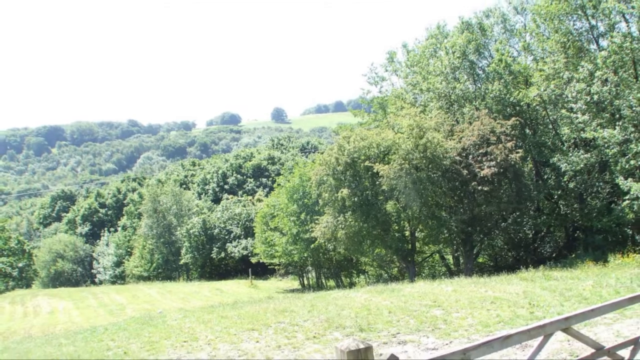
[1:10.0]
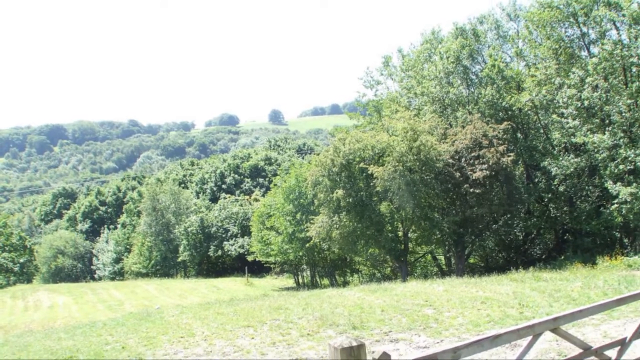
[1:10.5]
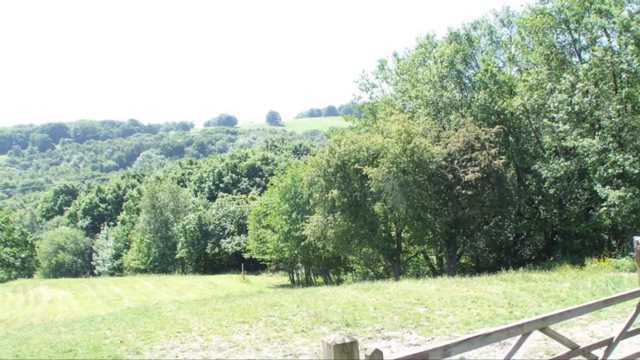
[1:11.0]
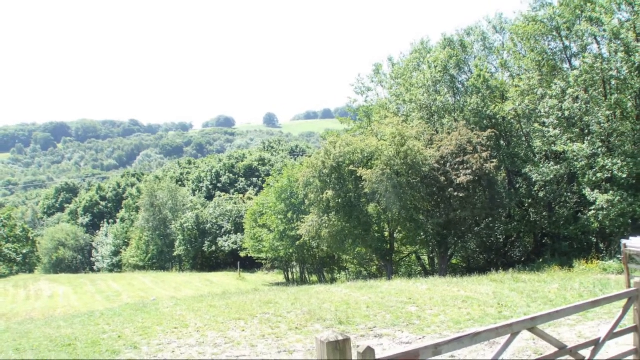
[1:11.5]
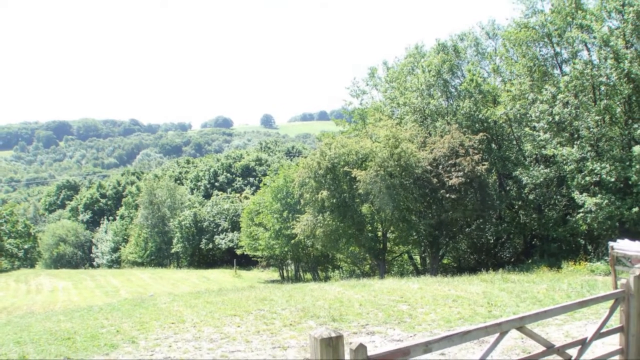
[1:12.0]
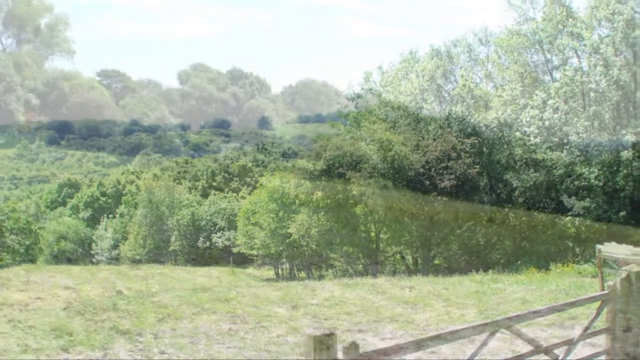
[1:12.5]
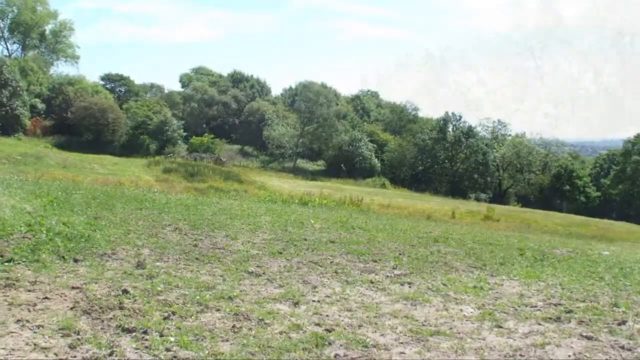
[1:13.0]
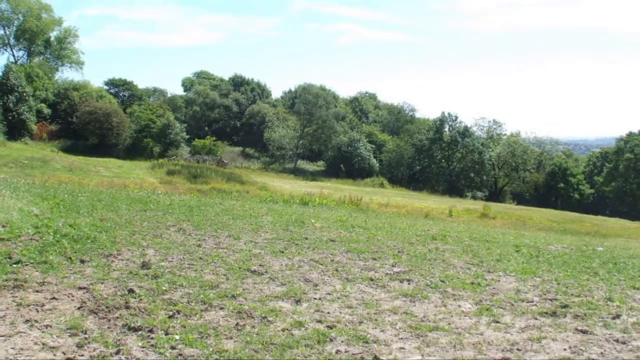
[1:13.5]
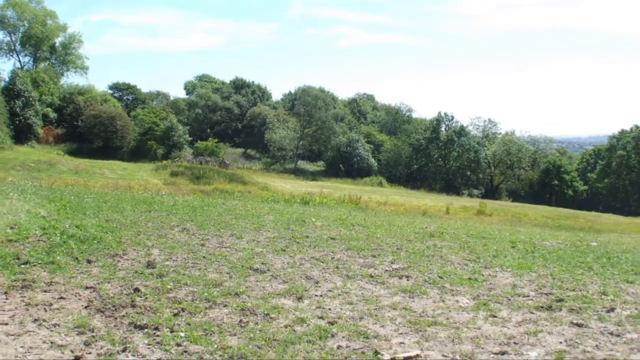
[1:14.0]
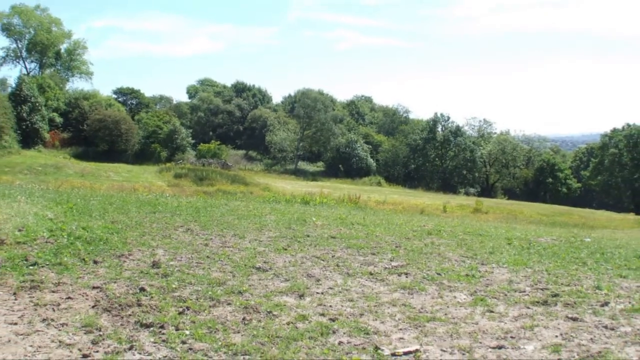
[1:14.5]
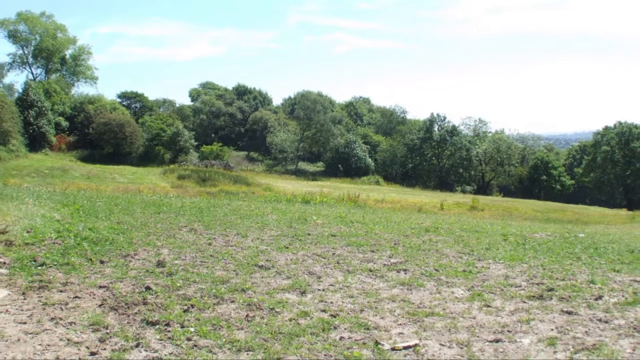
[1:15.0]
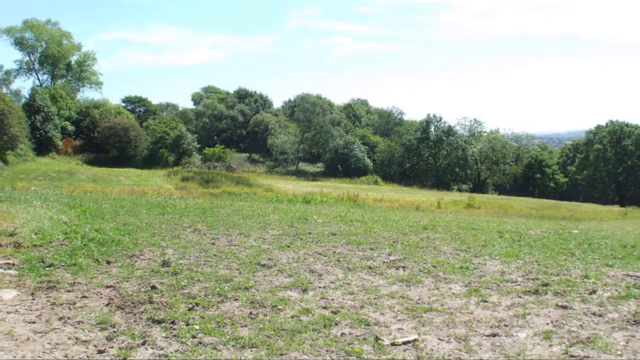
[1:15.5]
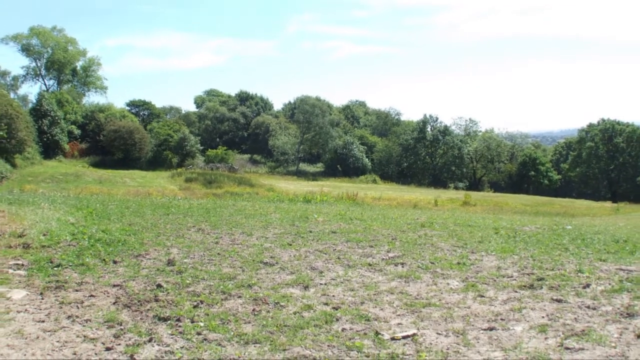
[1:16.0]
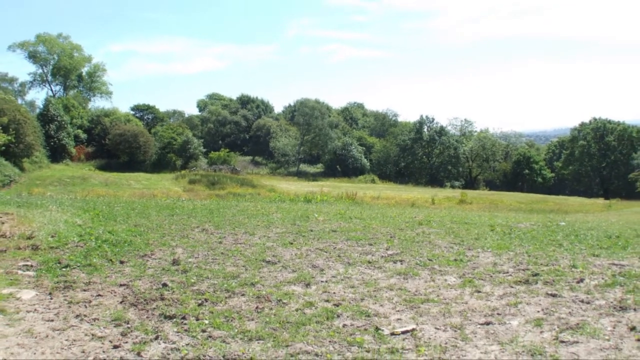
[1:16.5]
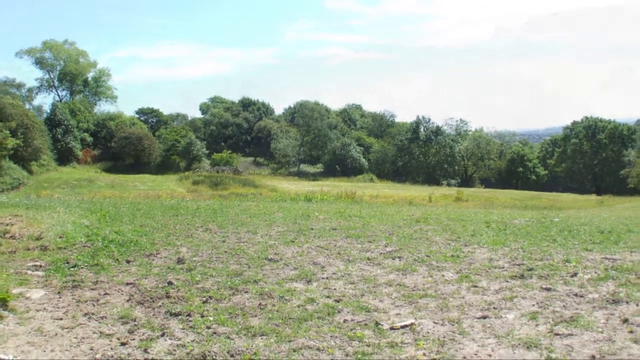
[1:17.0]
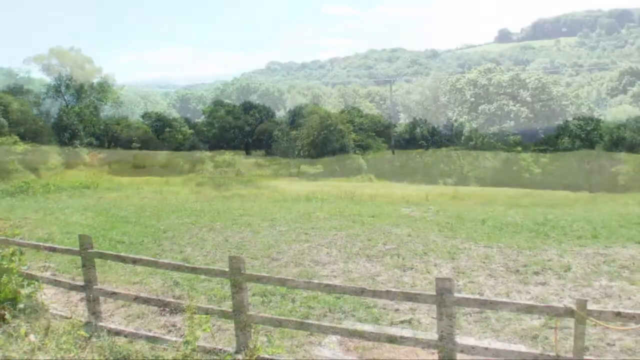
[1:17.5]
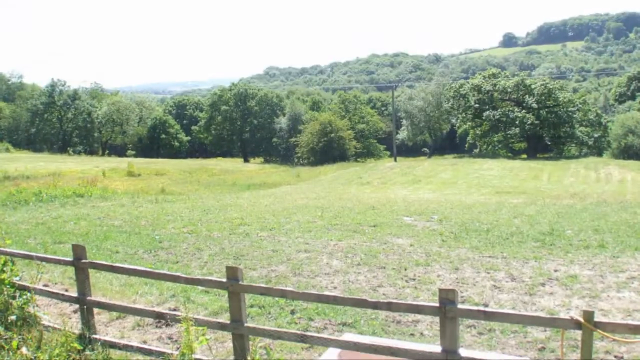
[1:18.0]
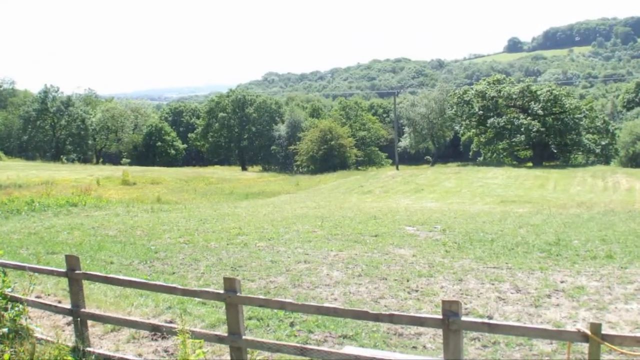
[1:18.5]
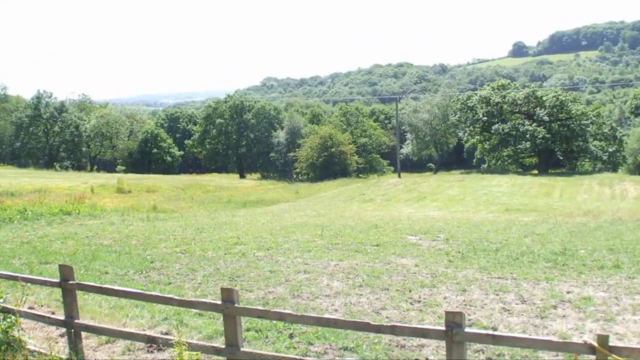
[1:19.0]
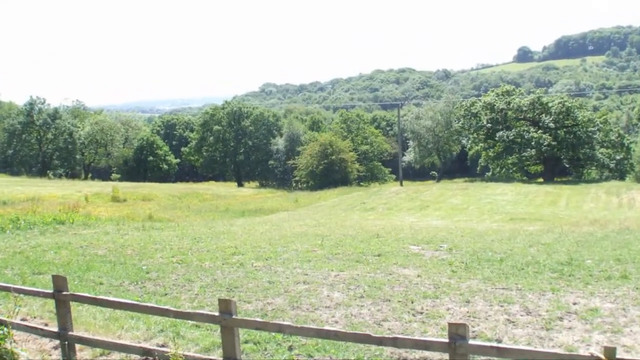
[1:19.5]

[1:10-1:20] A view looks out over the property across several rolling hills. In the distance there could be mountains, but there are trees everywhere, with green growth flourishing. The hills roll downward and the grass is very lush. Closer in, one area of the land has probably been grazed on or may have been used for tilling over the years. Only the landscape itself is shown. In the distance is another area, a clearing rather than a field. A small fence is visible, only briefly, perhaps more like a gate for that area. Shrubs come down the slope.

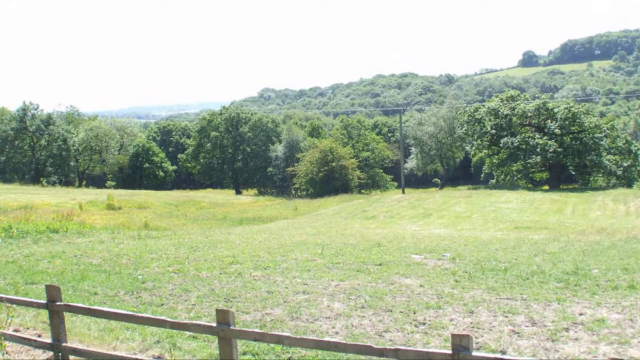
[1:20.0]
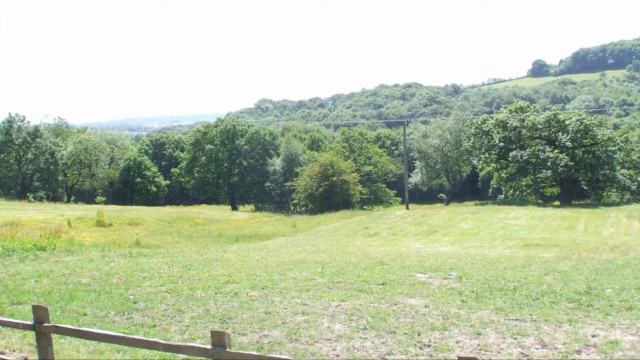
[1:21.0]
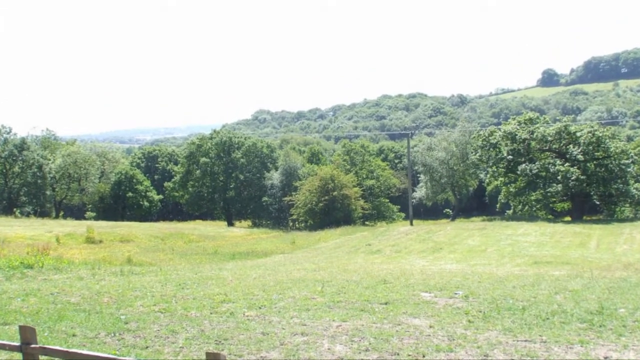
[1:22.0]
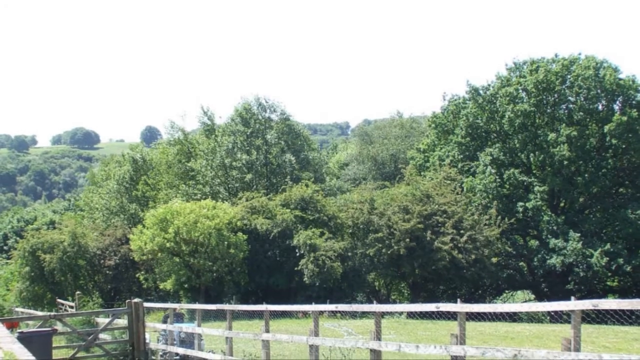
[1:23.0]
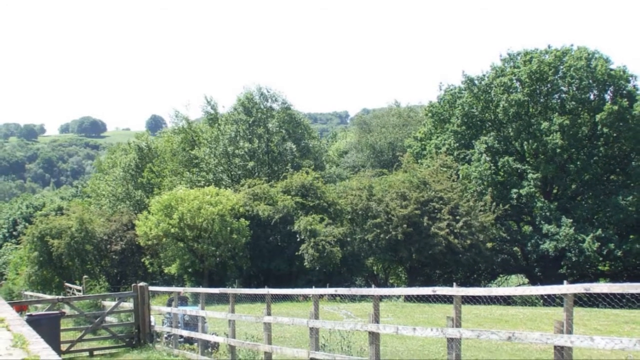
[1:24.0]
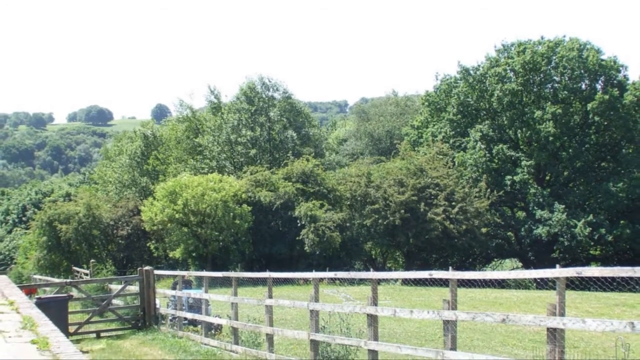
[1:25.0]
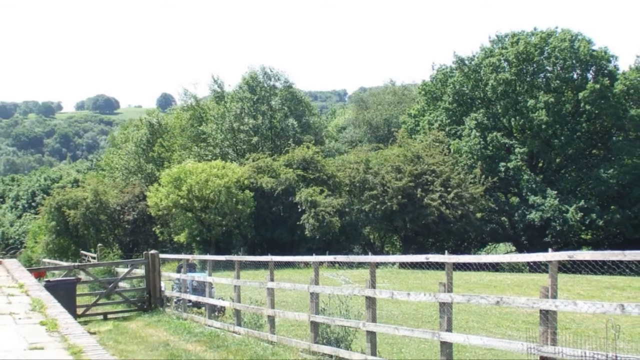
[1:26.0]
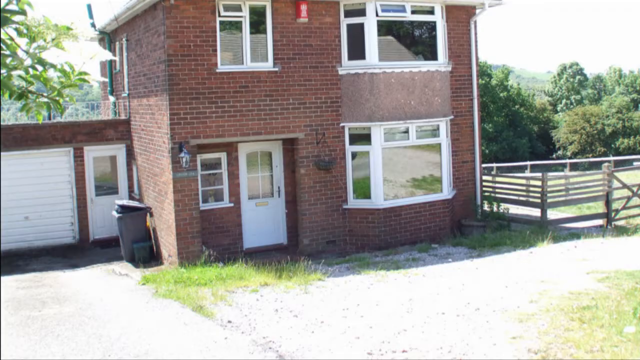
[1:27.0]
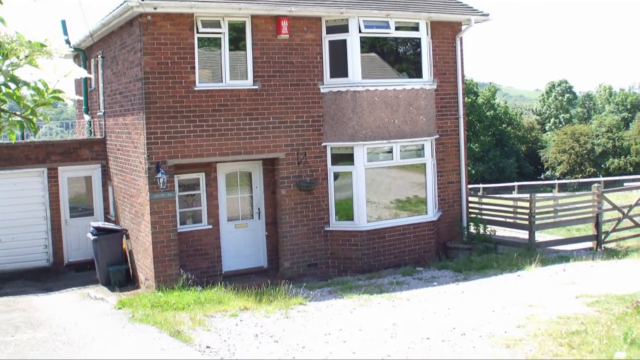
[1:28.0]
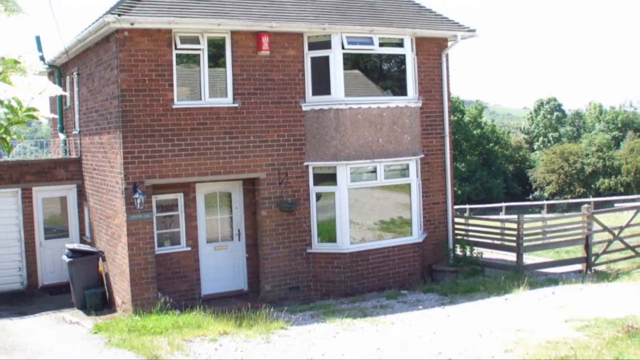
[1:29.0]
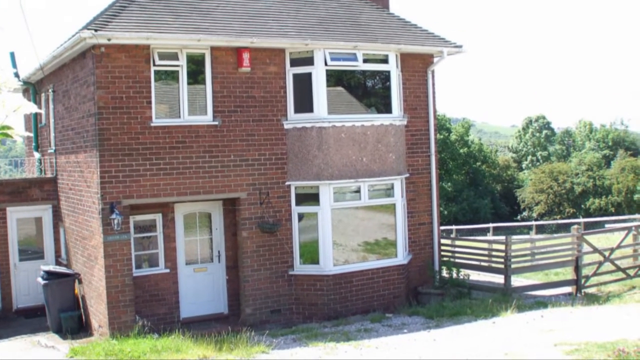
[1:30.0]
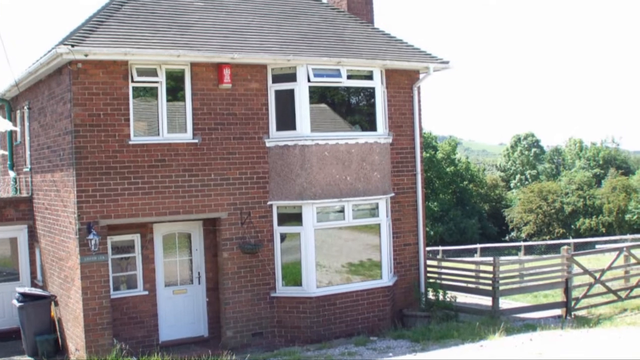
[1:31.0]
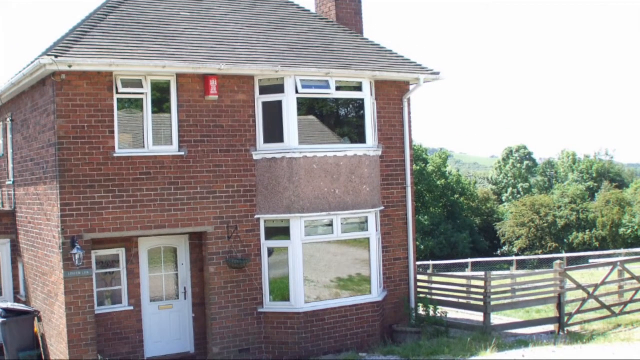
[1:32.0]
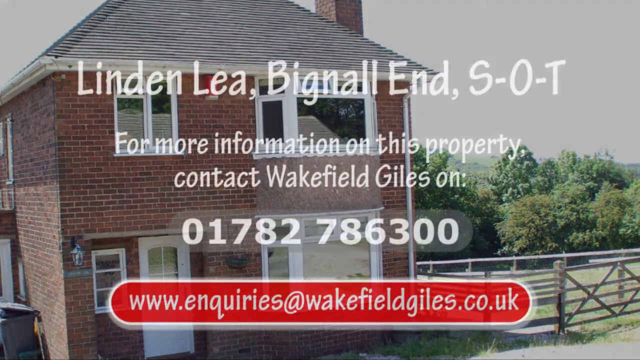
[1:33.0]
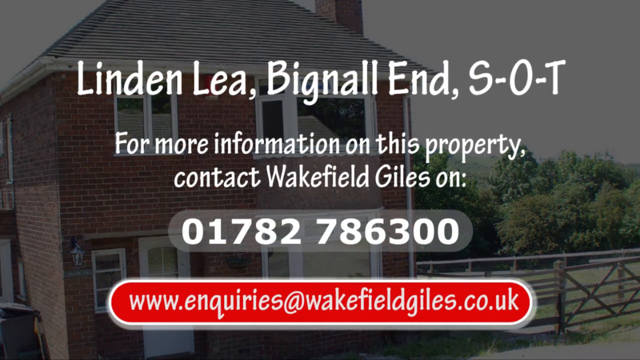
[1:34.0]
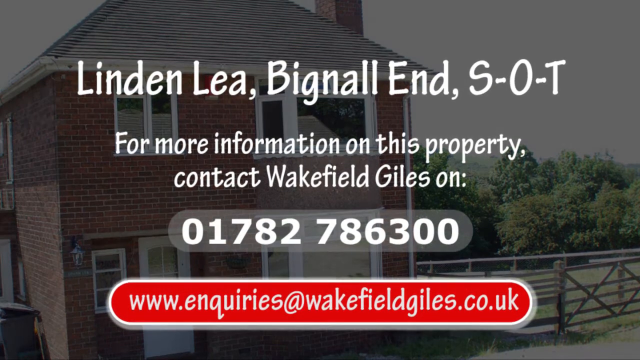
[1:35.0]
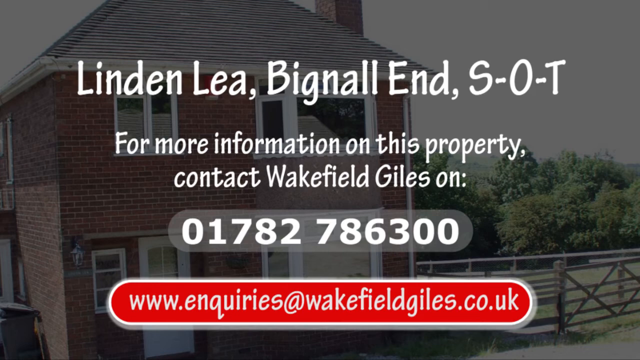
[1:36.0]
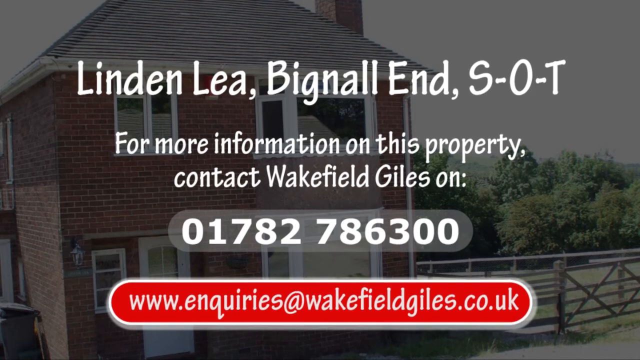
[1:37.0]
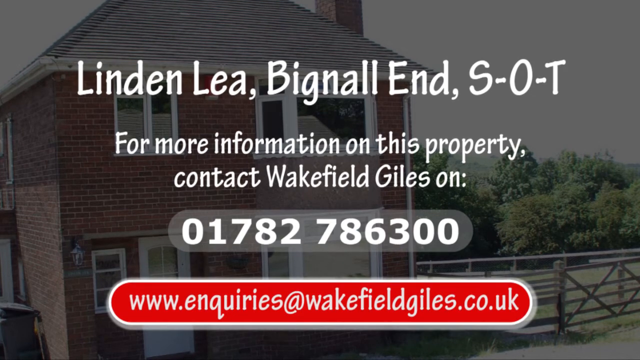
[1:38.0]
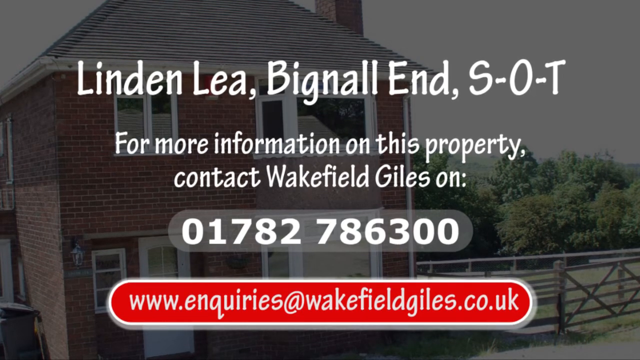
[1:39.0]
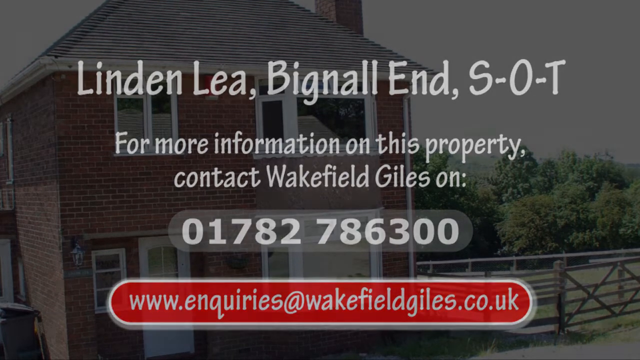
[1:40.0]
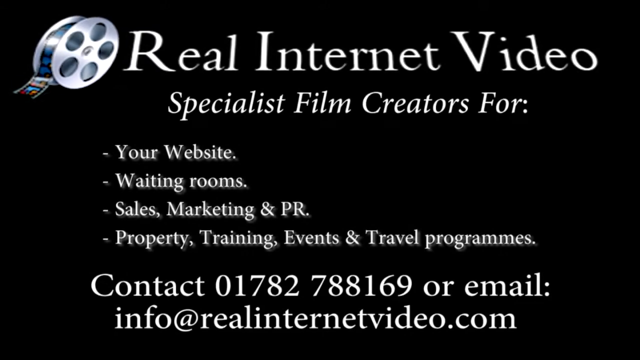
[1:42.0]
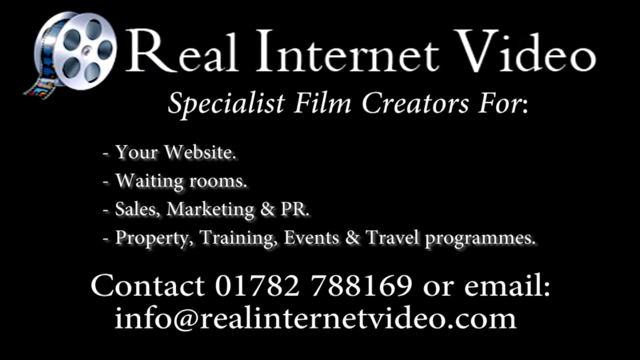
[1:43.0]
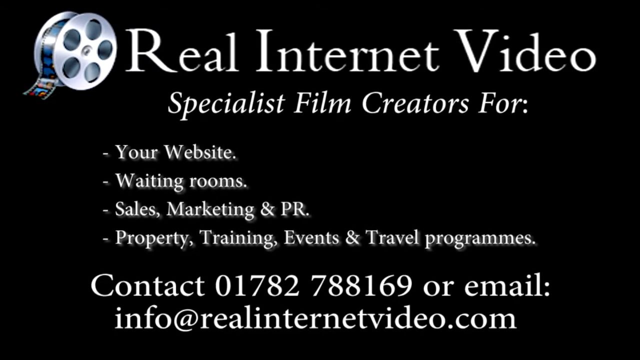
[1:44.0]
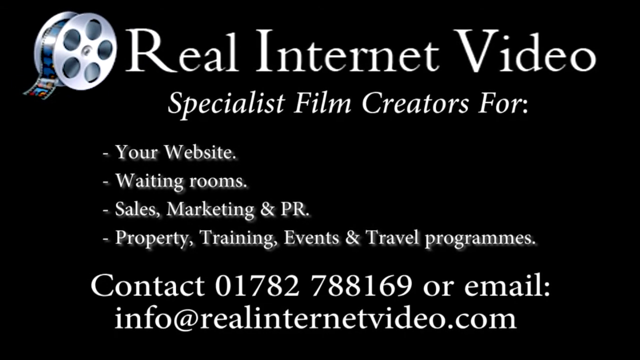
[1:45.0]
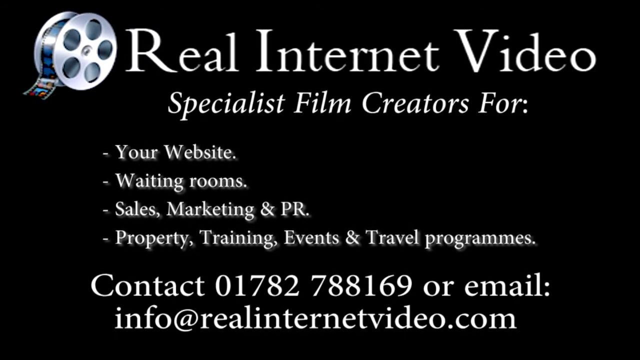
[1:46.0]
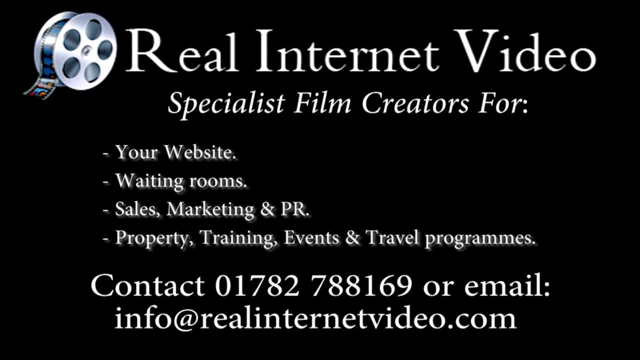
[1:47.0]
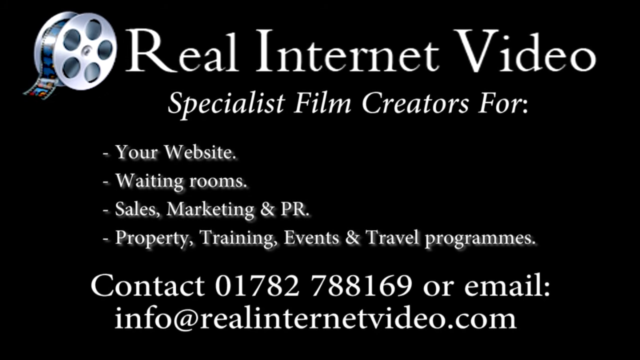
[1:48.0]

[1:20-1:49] The view returns to the property, which apparently has something to do with horses, perhaps equestrian land. Looking closely at the fencing, between the boards of what looks like cattle fencing there is chain-link fence. On the left-hand side, a little bit of stone leads toward the gate. The original two-story house is part of this property. Text then appears: "Real Internet Video, Specialist Film Creators For: your website, waiting rooms, sales, marketing, and PR."